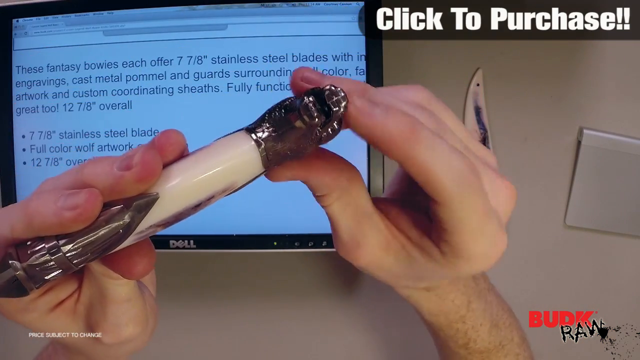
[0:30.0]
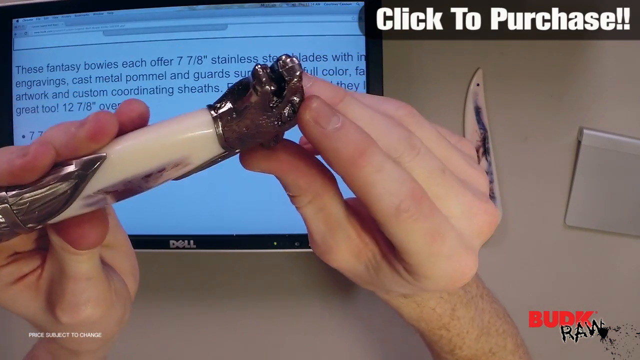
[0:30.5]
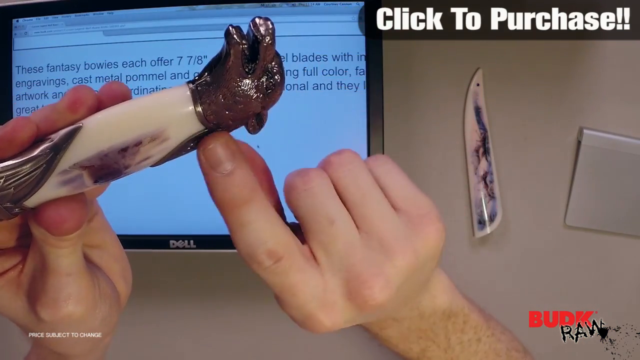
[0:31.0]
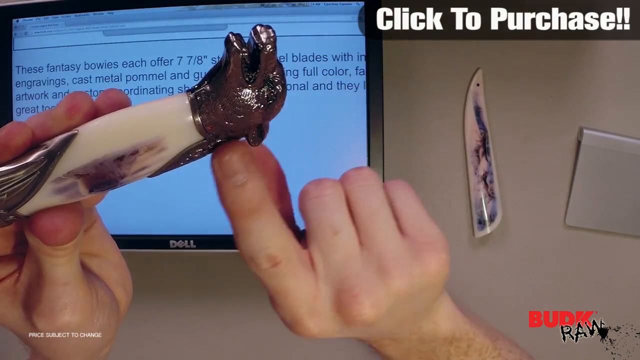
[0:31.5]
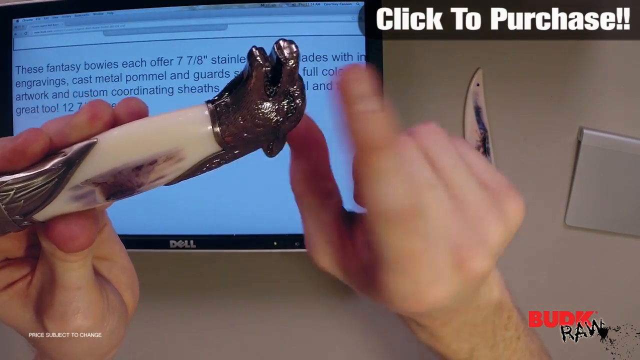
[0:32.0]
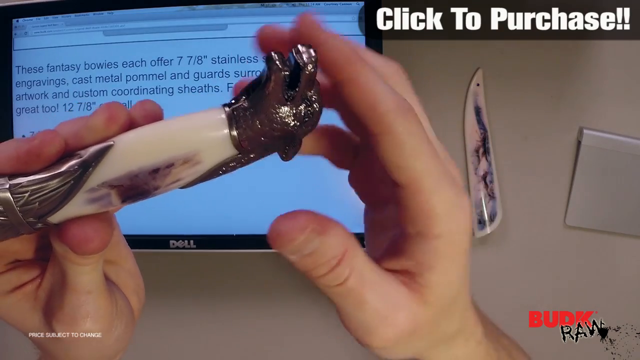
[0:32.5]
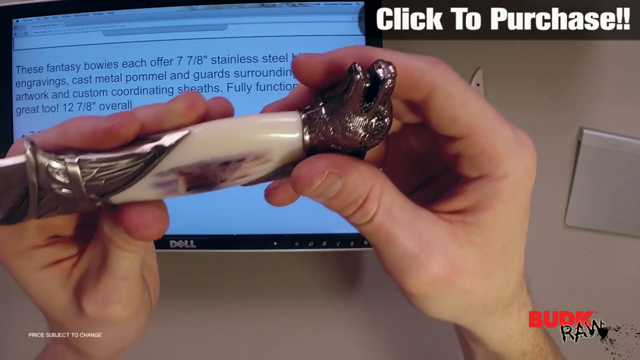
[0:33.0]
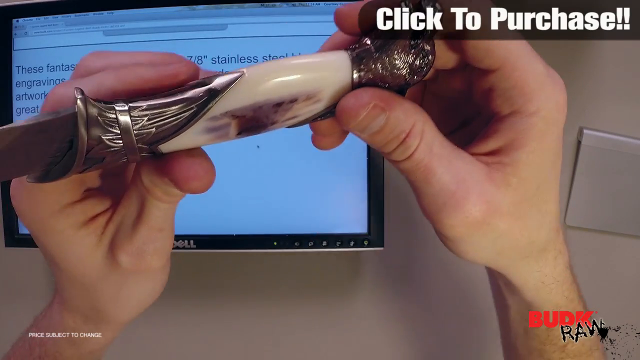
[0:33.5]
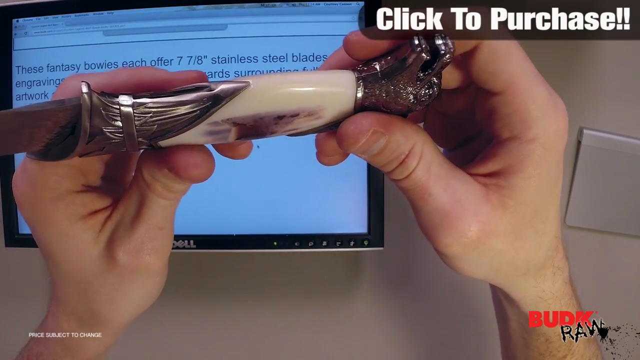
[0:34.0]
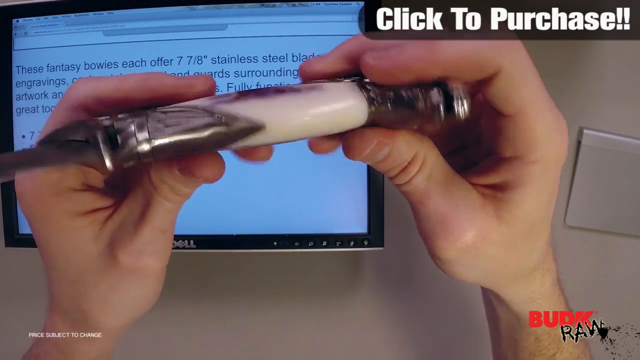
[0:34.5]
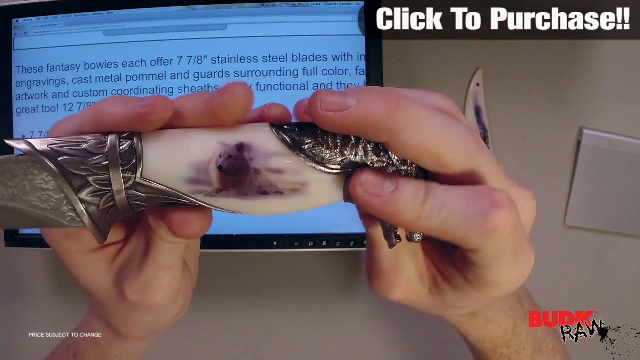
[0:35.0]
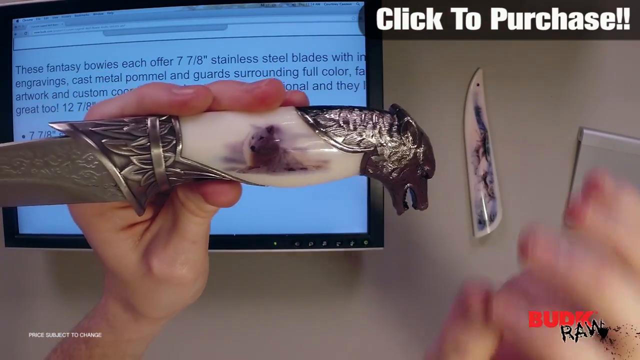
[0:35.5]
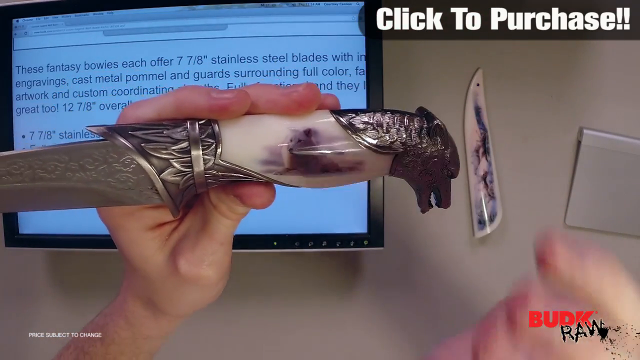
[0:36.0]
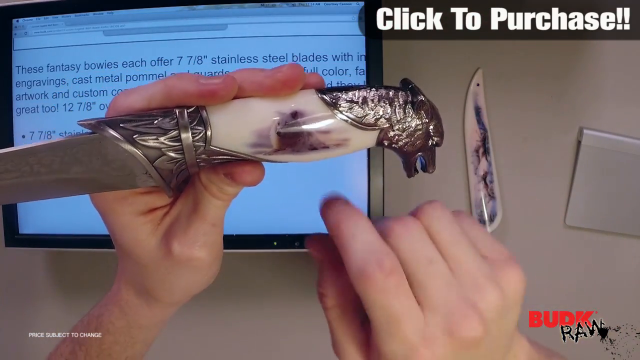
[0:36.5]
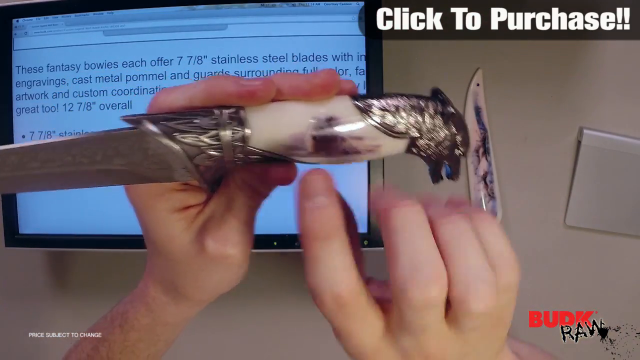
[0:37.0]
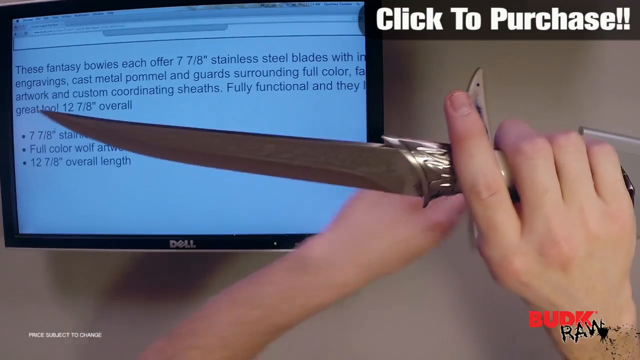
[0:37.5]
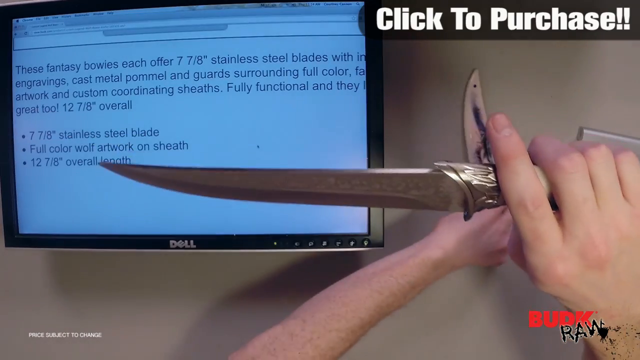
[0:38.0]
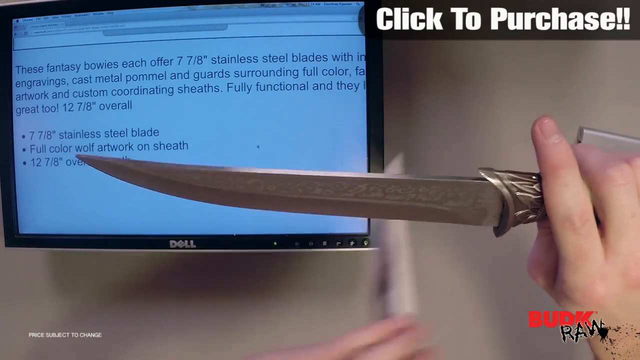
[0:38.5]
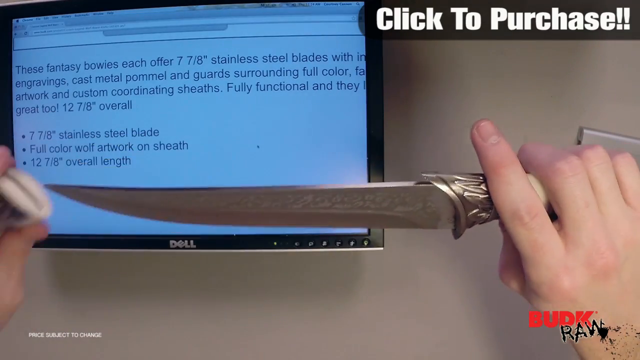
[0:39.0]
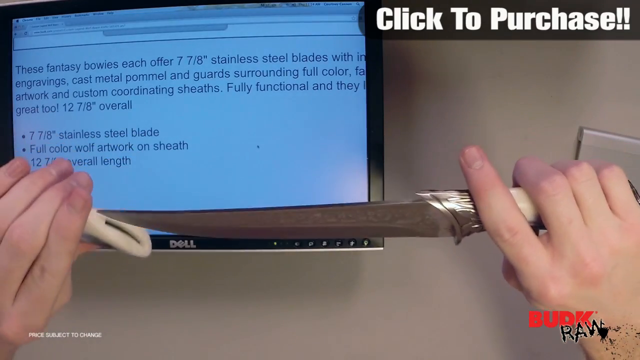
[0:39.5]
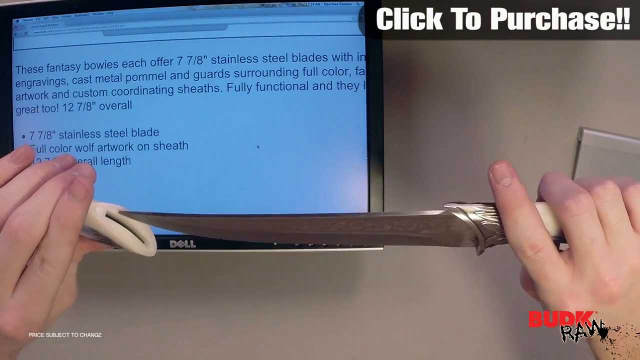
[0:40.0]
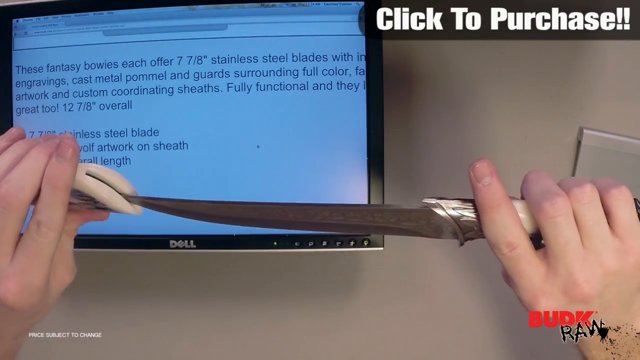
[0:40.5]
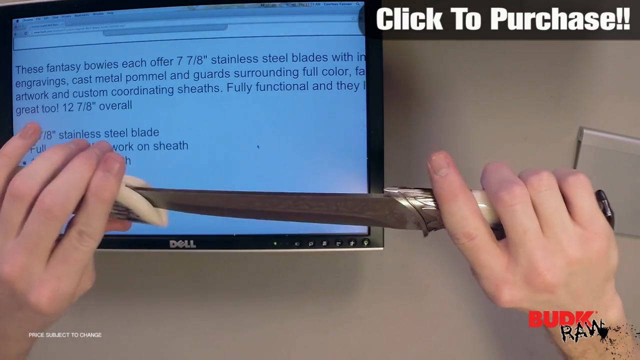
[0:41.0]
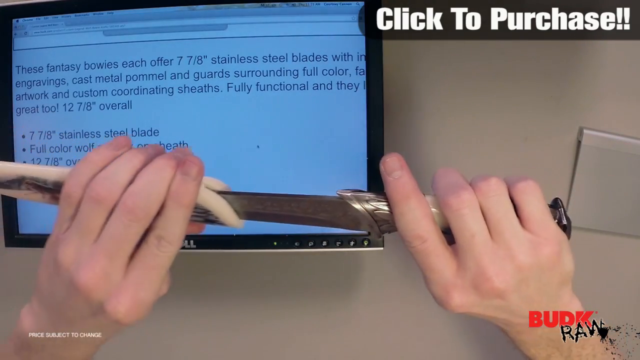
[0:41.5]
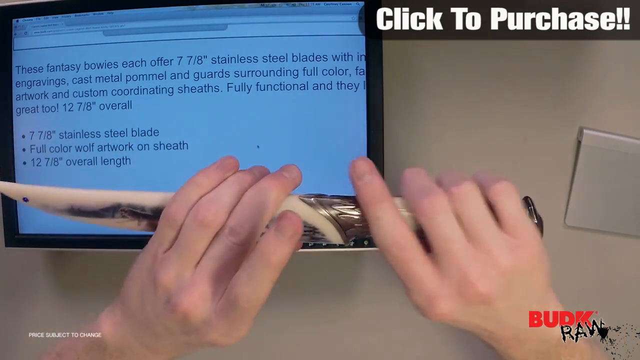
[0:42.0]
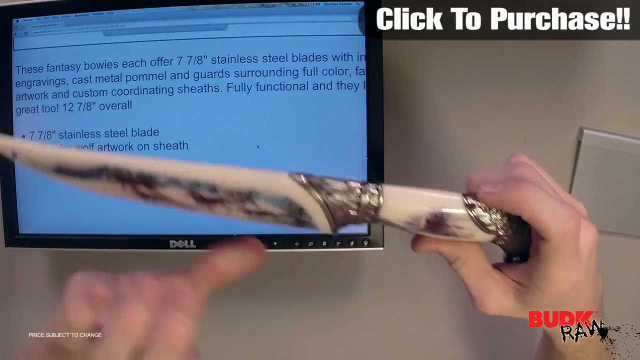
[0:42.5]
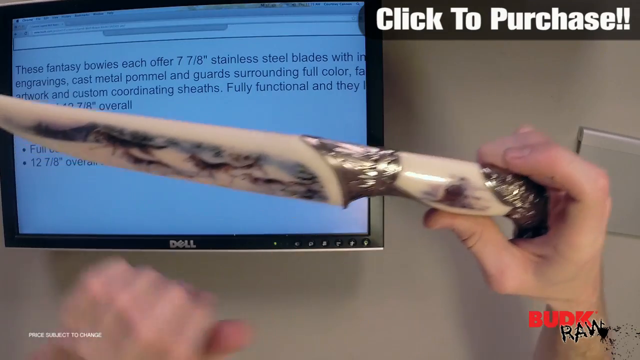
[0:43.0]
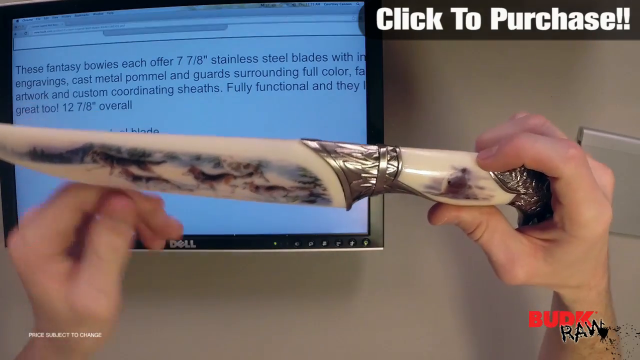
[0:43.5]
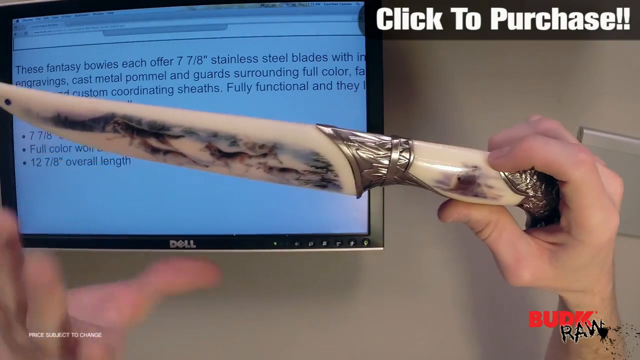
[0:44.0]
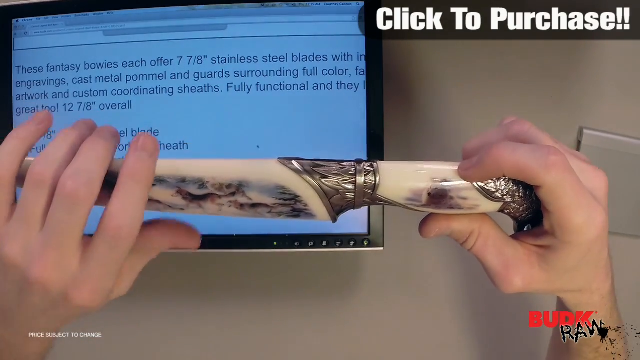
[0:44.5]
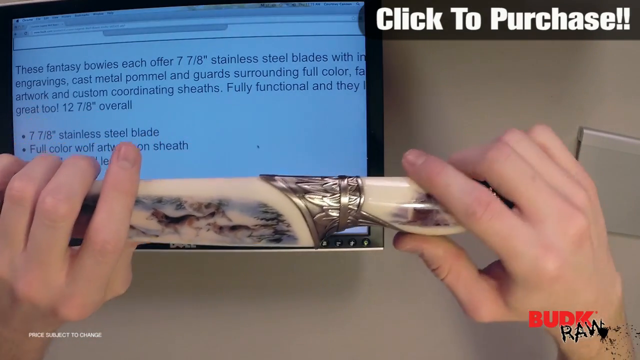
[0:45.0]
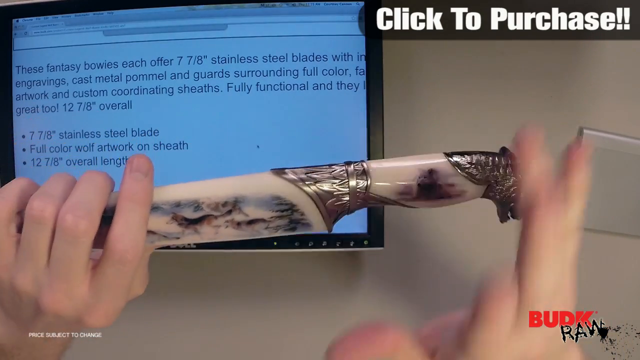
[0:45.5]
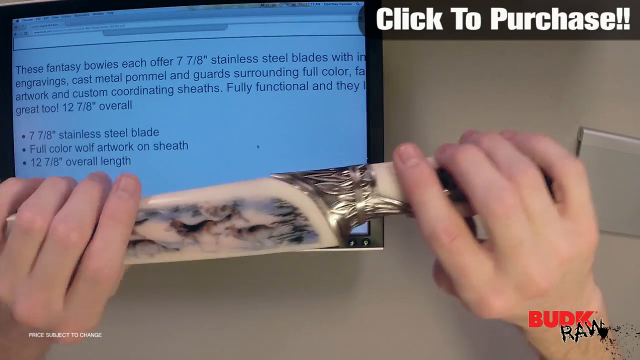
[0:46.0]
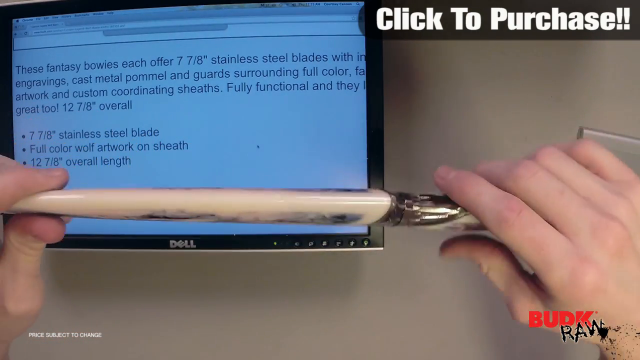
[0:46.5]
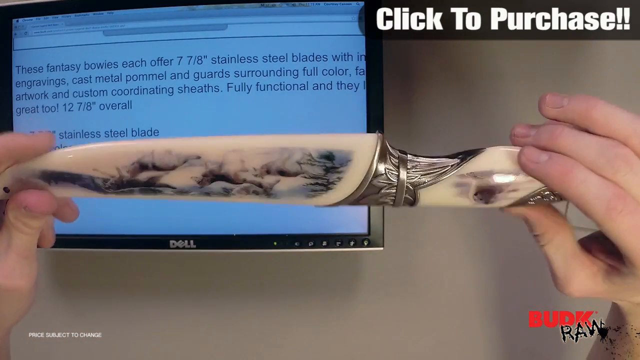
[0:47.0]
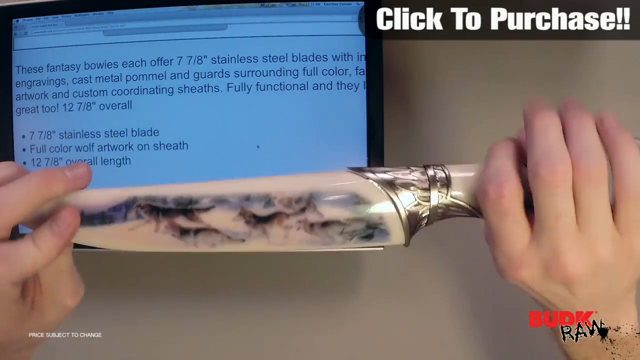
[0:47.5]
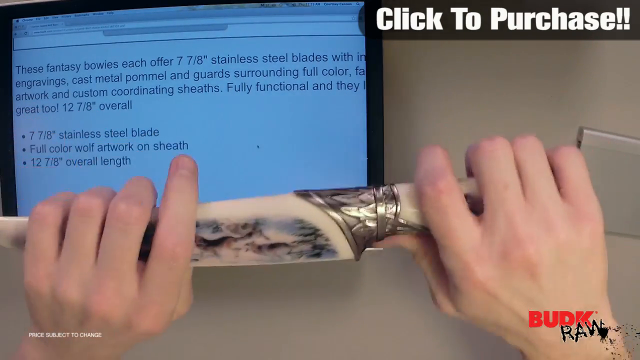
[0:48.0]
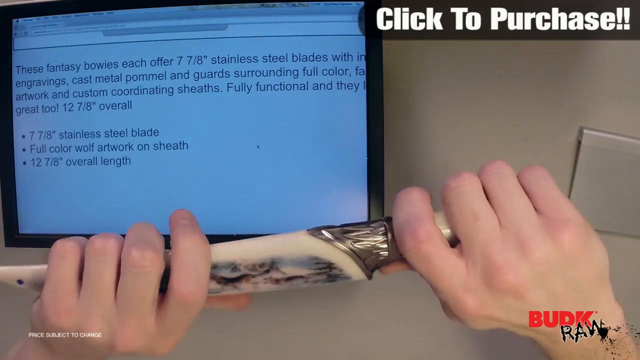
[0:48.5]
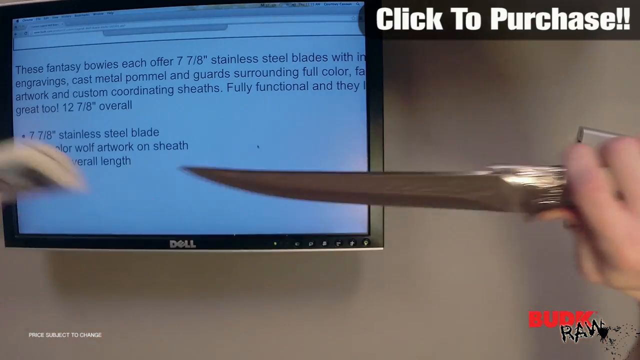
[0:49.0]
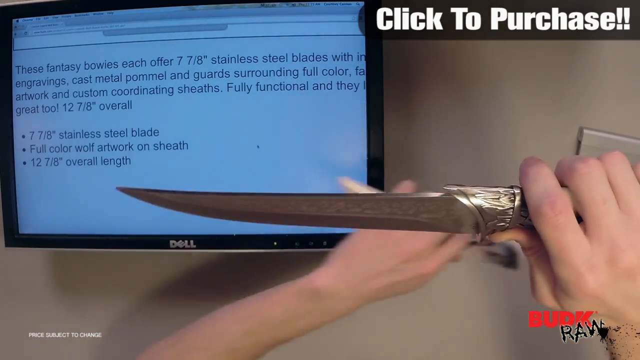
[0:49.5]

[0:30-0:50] The knife has a cover, and the man takes the knife out of its cover again, still showing the wolf design while going over its features. A Dell monitor is in the background, along with a trackpad. The knife is a war-styled knife with a nice color.